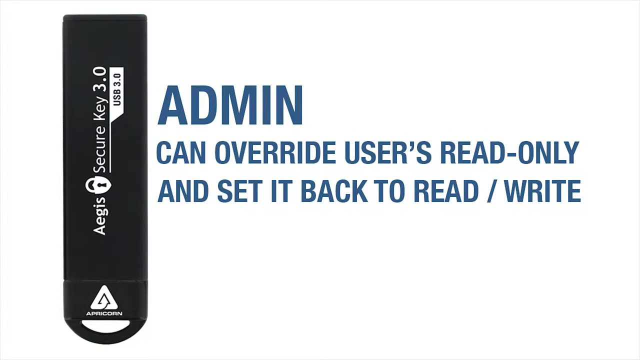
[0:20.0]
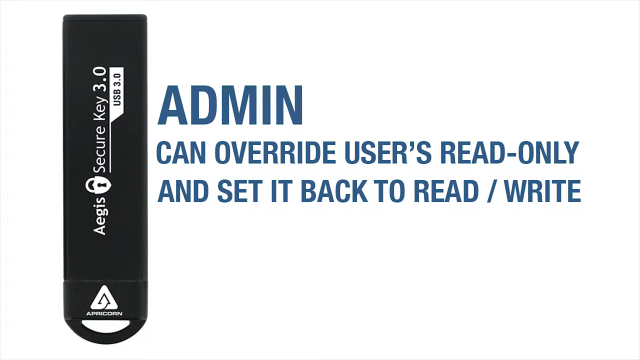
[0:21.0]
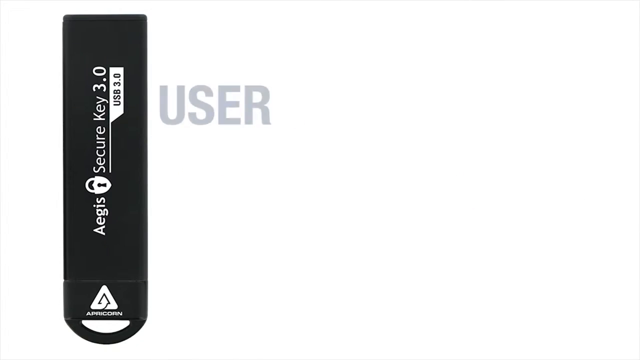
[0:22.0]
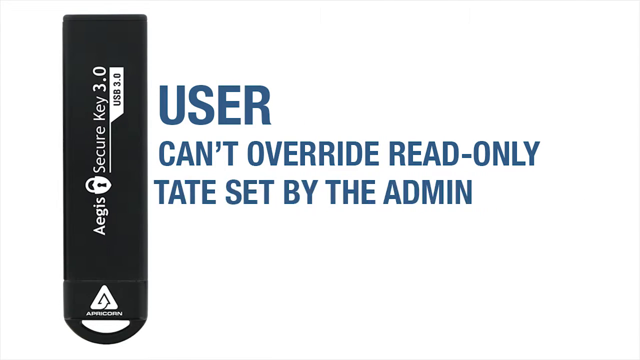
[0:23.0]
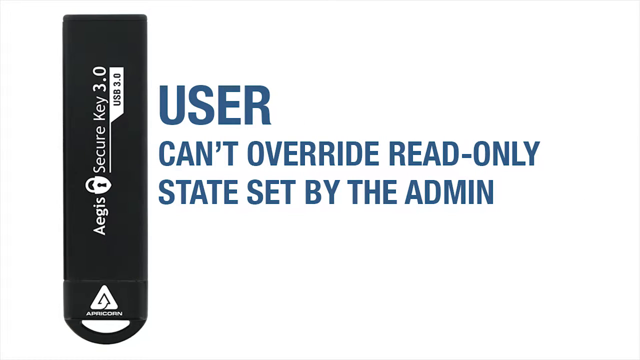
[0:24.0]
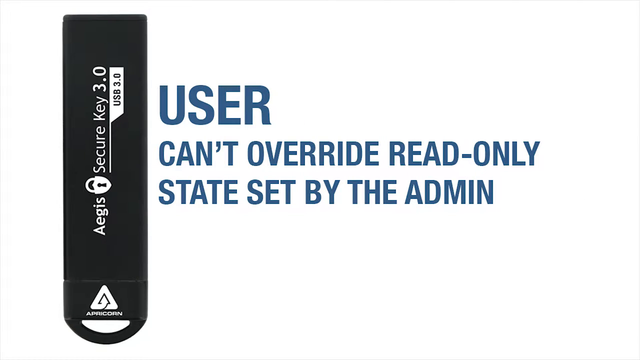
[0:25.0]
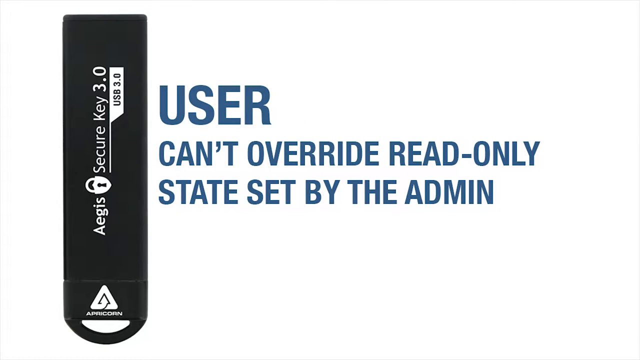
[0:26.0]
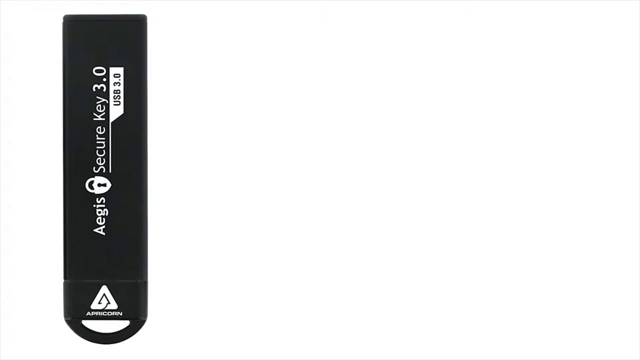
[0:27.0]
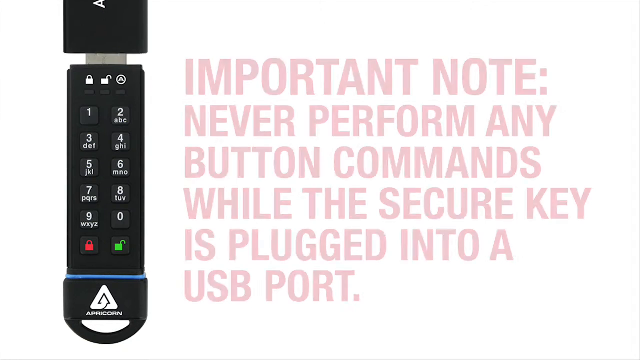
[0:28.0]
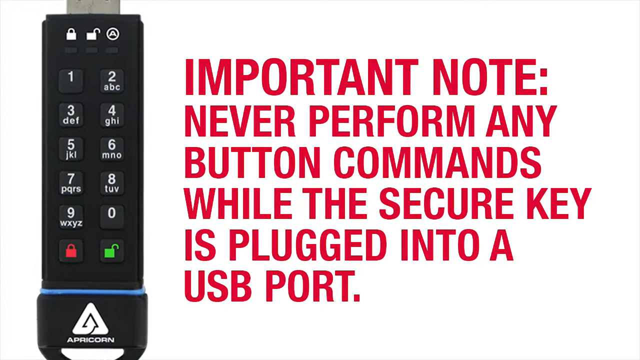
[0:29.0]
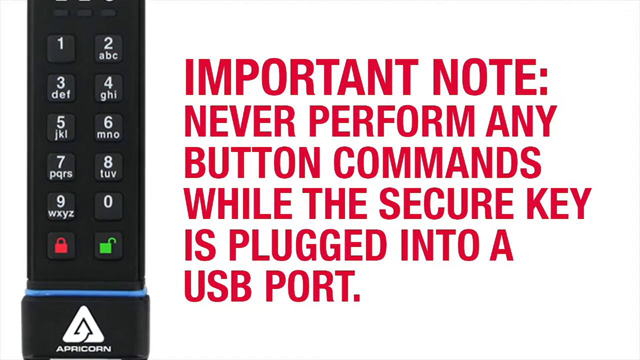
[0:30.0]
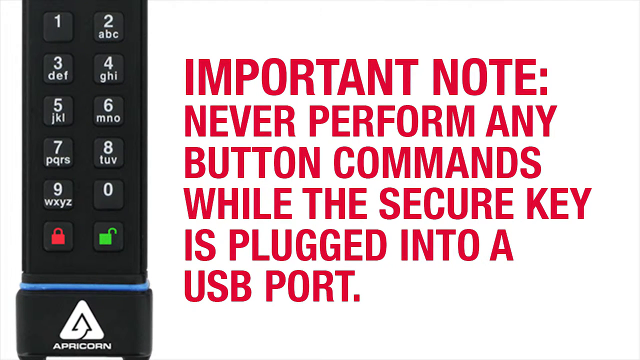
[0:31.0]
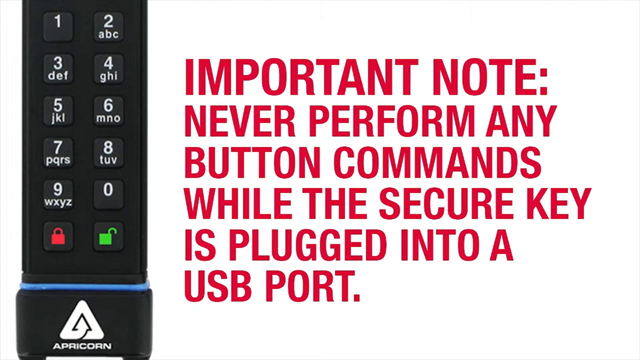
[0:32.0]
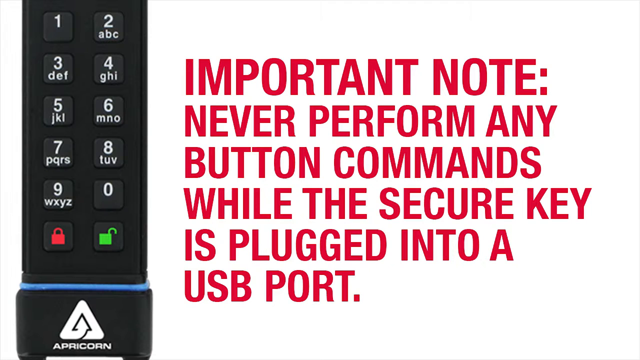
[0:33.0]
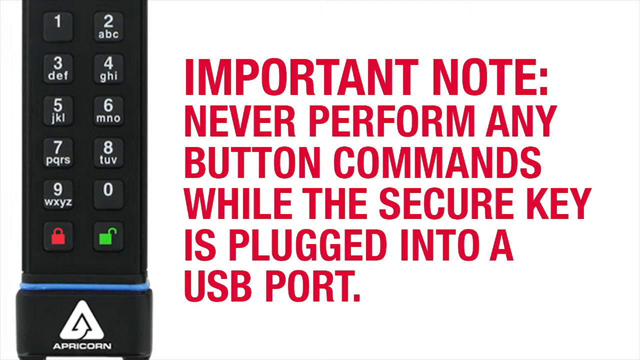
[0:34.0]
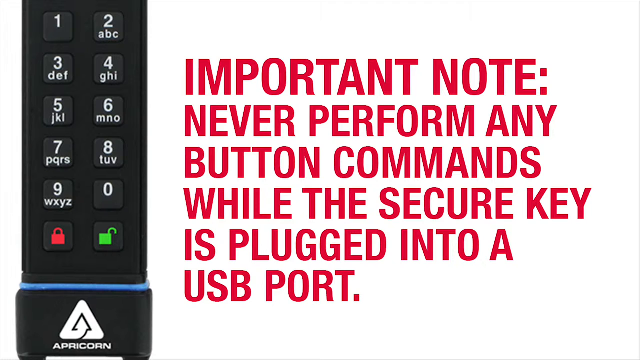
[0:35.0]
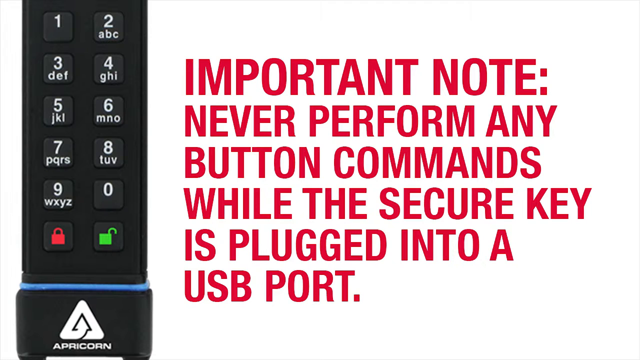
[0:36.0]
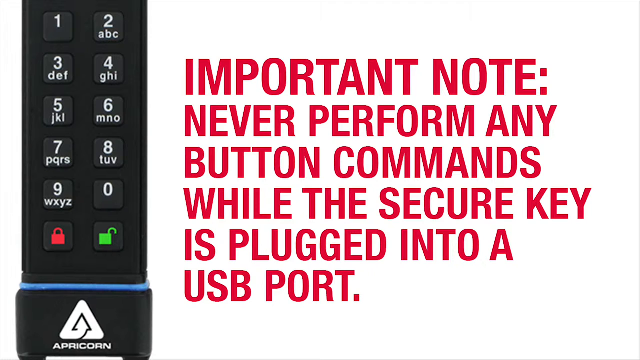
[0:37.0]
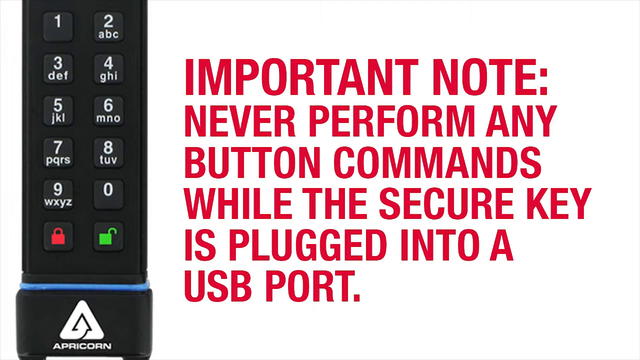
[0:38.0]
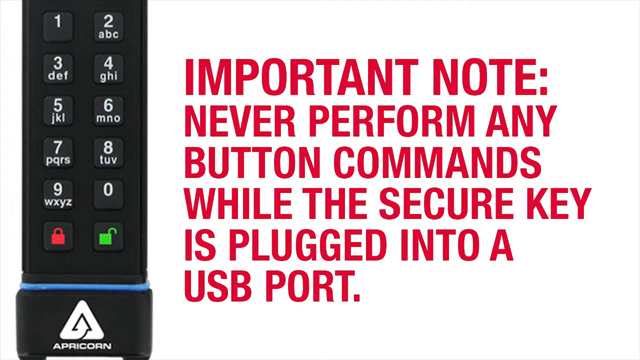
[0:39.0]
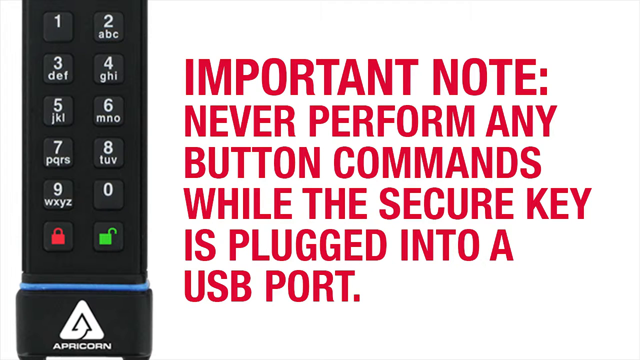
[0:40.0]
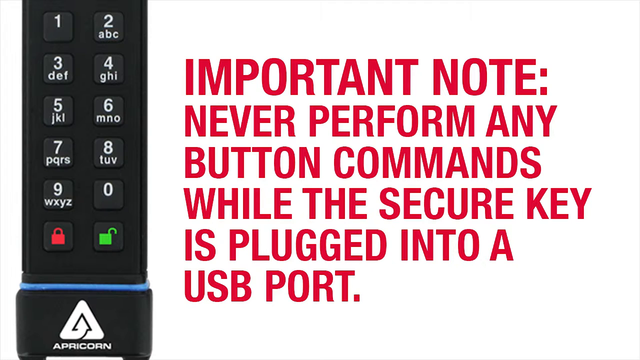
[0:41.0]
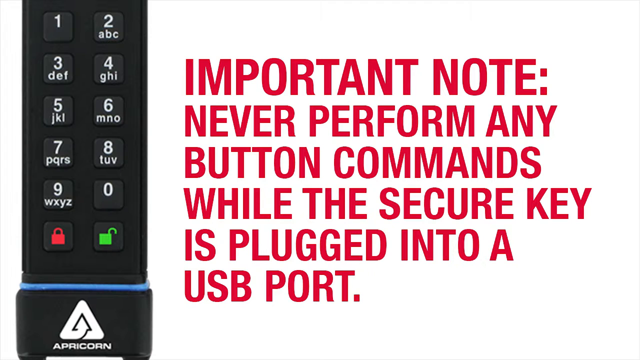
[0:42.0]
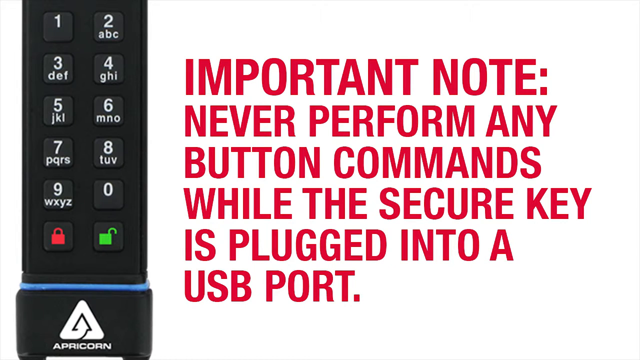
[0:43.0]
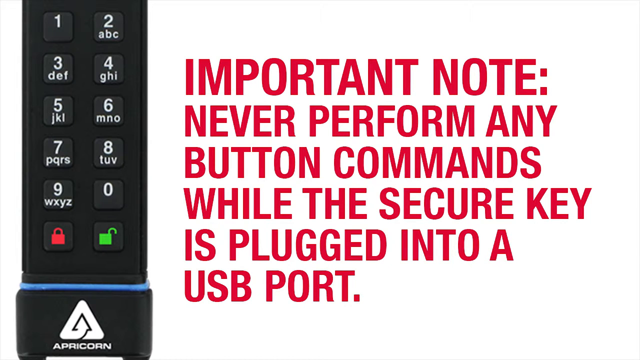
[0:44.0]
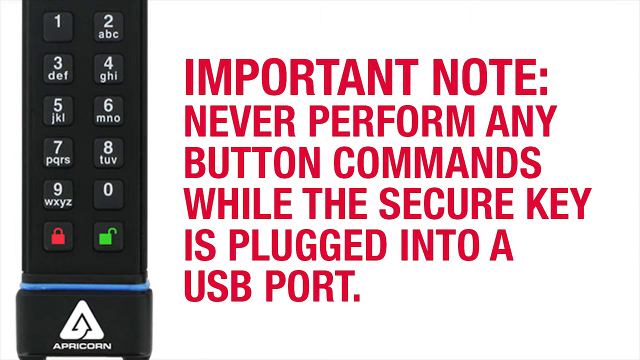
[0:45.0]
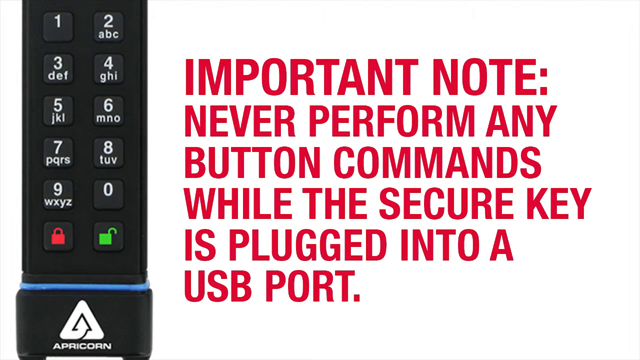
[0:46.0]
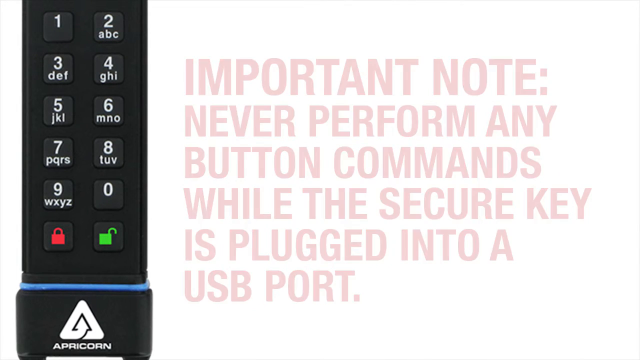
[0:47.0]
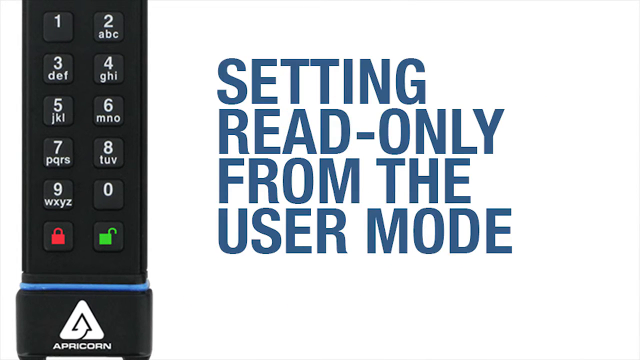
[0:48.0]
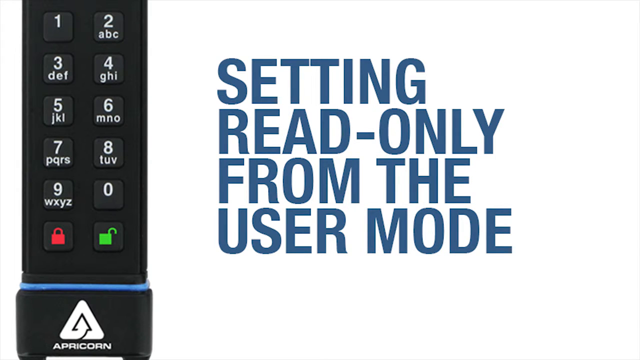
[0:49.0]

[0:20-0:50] The instructions continue with the user mode, which cannot override the read-only state set by the admin. An important note follows: "never perform any button commands while the secure key is plugged into a USB port." The device is shown placed in a USB port. The next section reads "read only from the user mode."